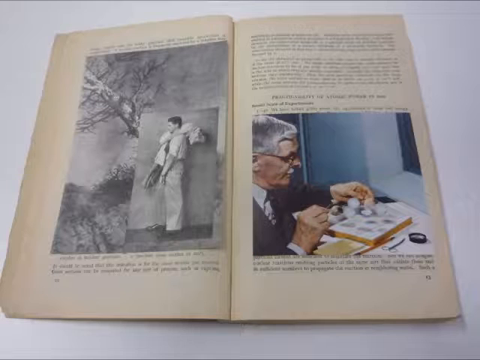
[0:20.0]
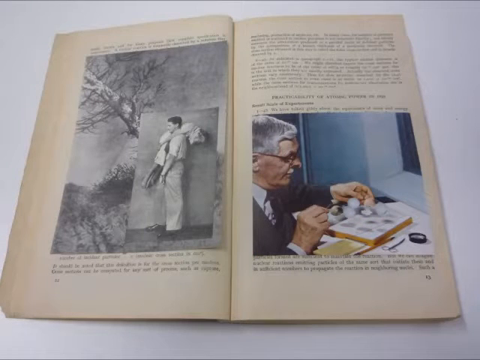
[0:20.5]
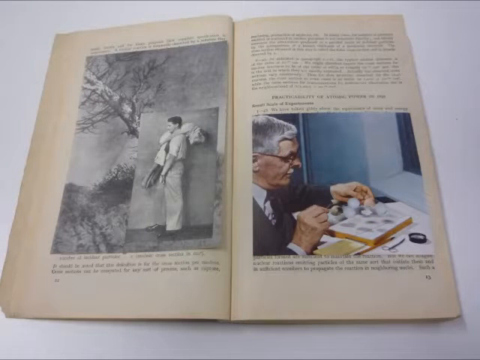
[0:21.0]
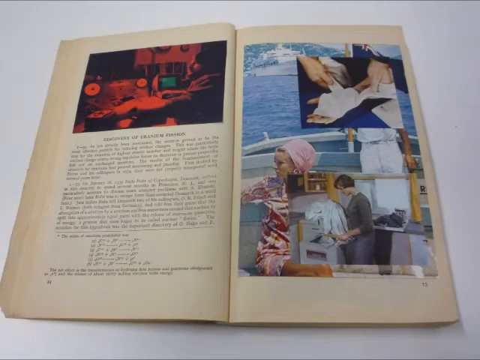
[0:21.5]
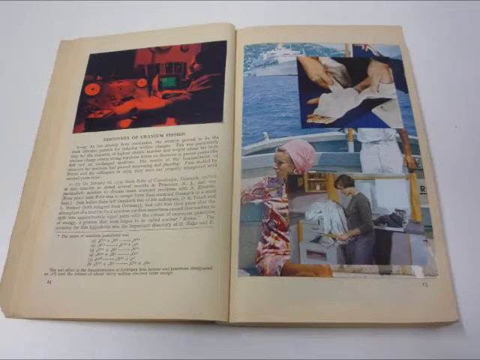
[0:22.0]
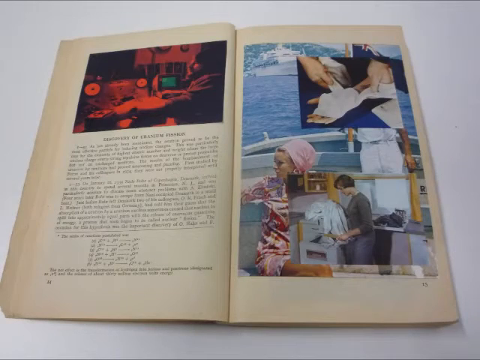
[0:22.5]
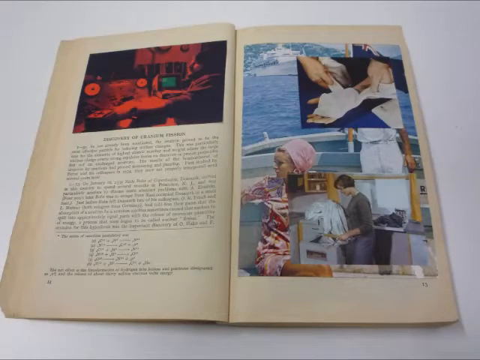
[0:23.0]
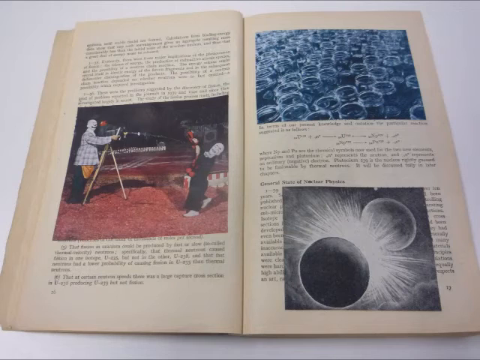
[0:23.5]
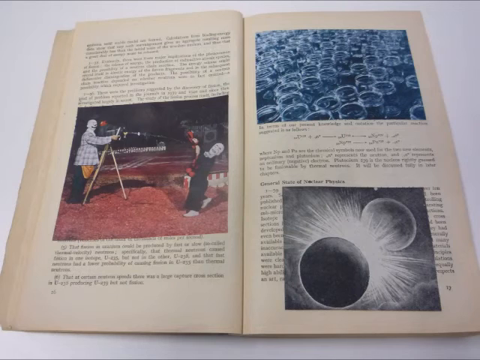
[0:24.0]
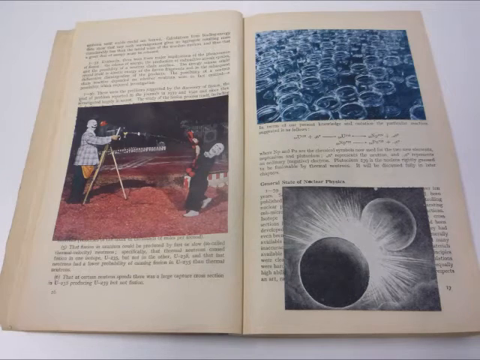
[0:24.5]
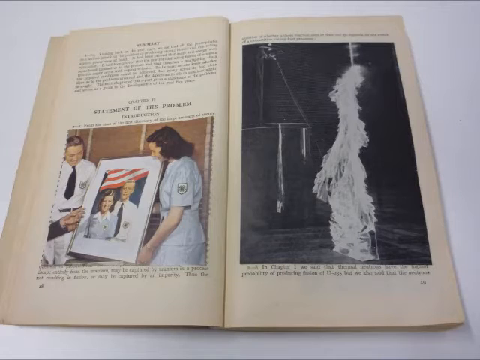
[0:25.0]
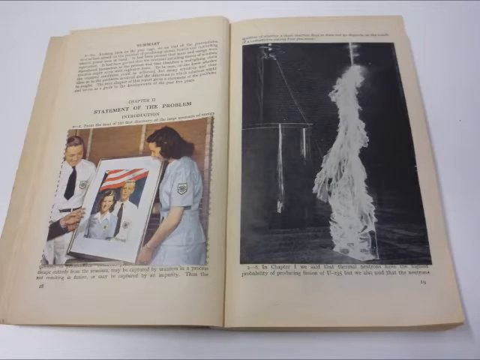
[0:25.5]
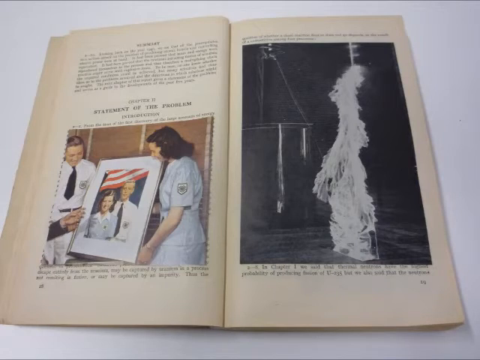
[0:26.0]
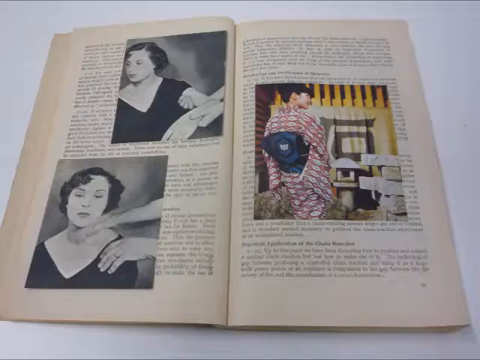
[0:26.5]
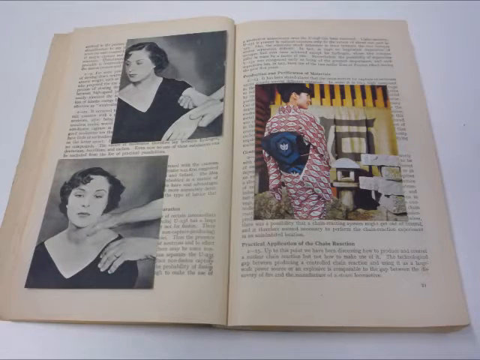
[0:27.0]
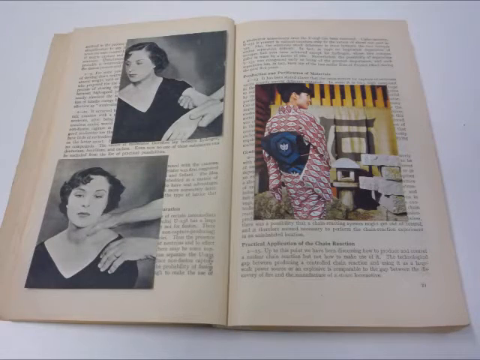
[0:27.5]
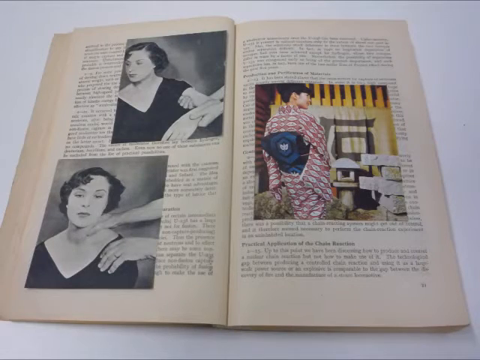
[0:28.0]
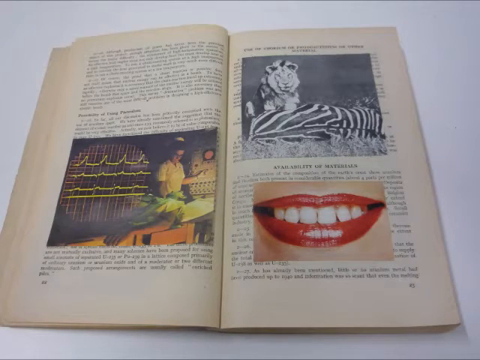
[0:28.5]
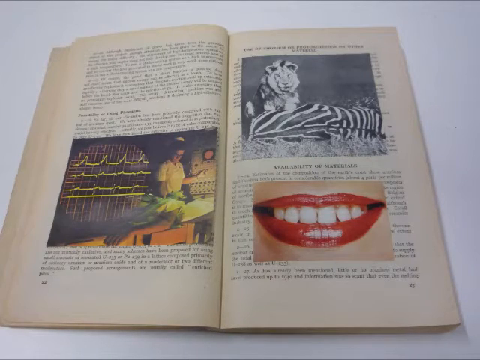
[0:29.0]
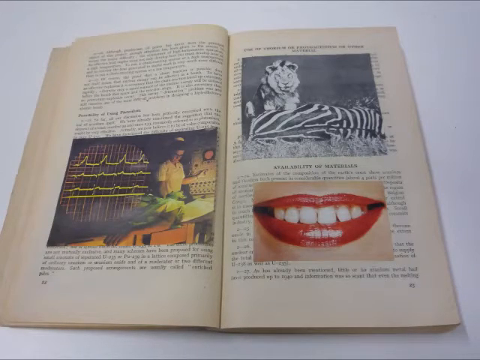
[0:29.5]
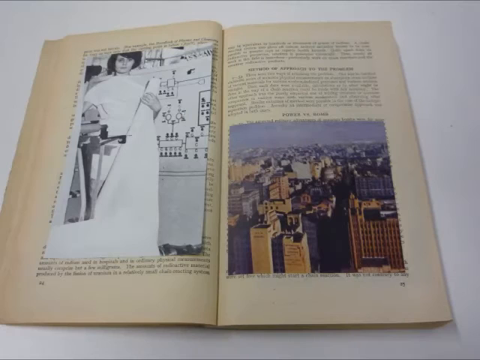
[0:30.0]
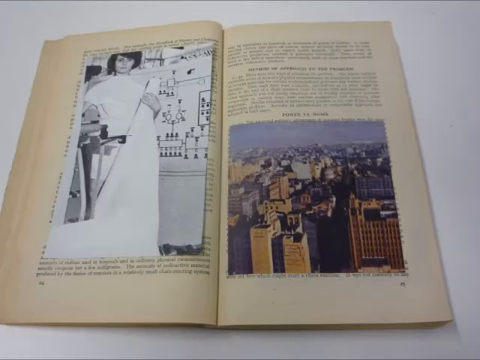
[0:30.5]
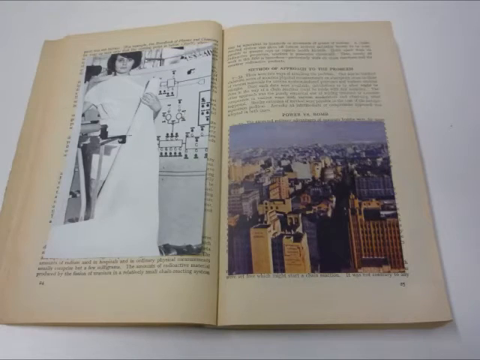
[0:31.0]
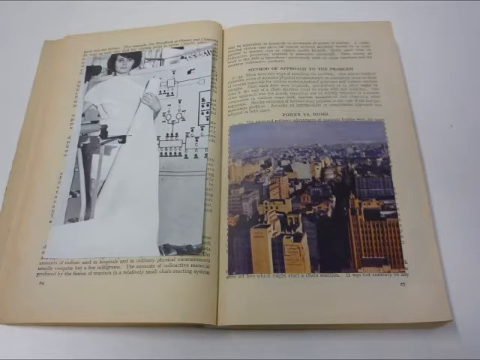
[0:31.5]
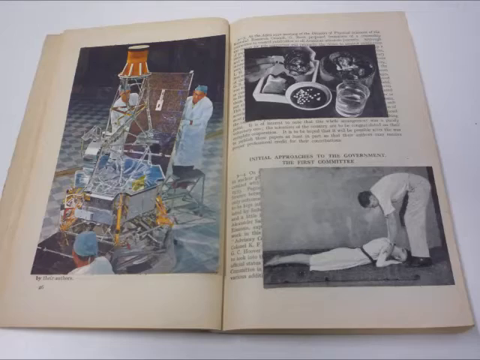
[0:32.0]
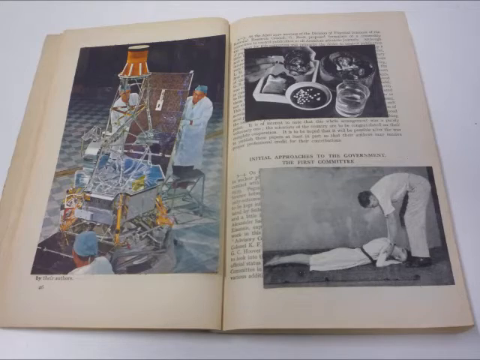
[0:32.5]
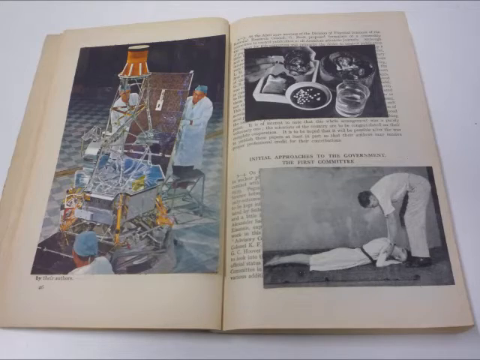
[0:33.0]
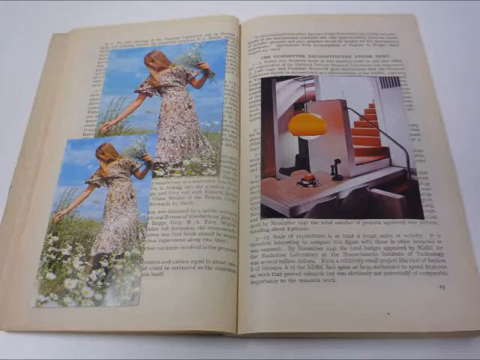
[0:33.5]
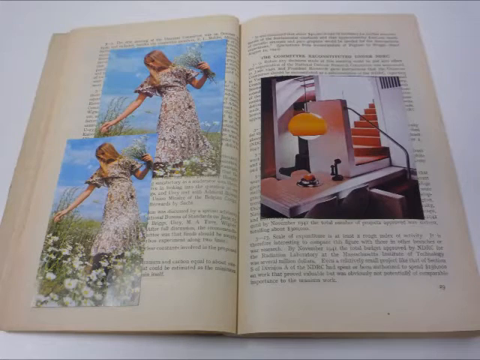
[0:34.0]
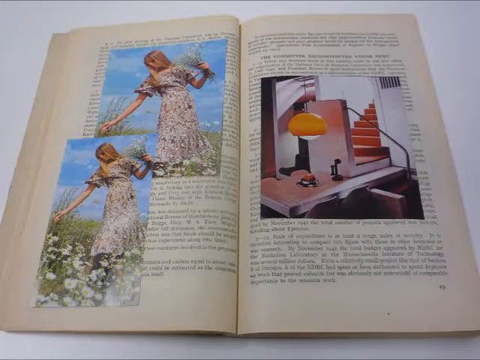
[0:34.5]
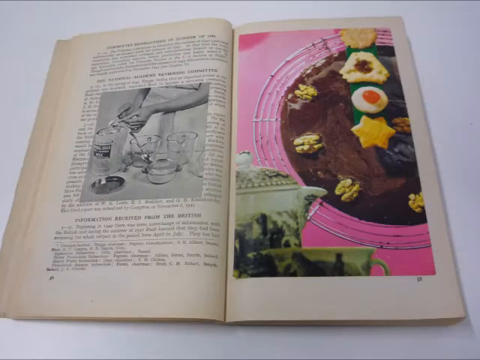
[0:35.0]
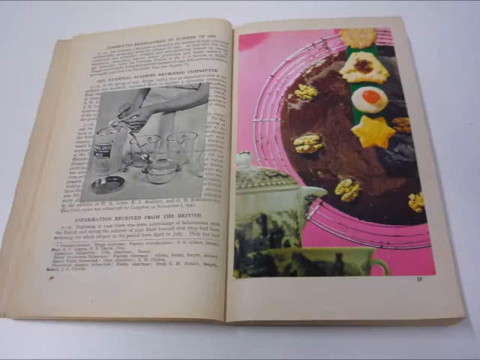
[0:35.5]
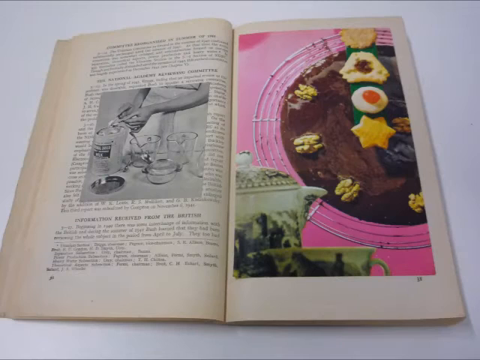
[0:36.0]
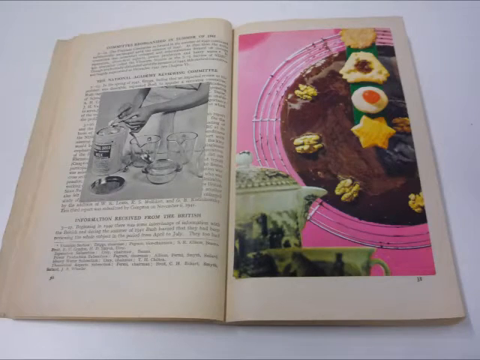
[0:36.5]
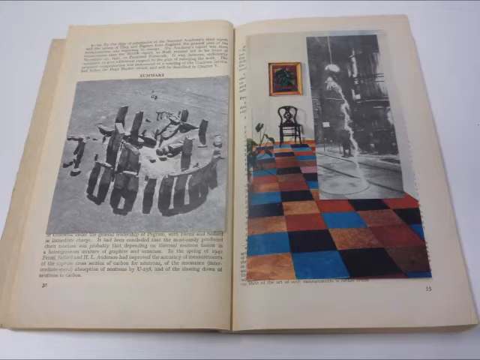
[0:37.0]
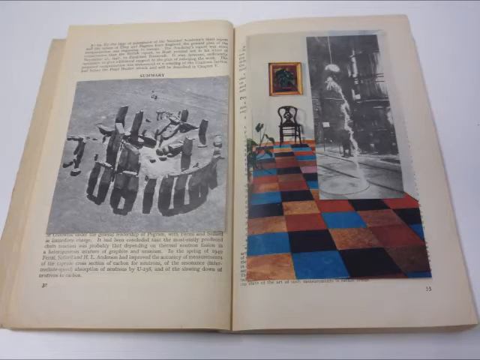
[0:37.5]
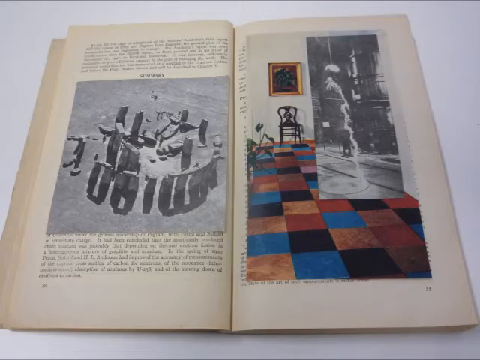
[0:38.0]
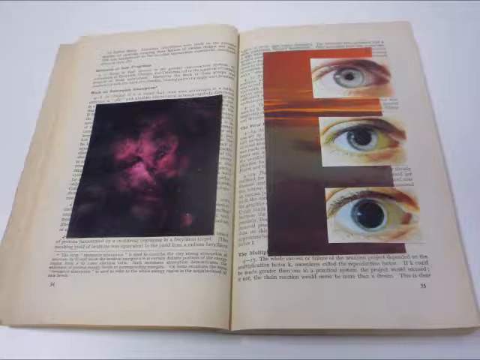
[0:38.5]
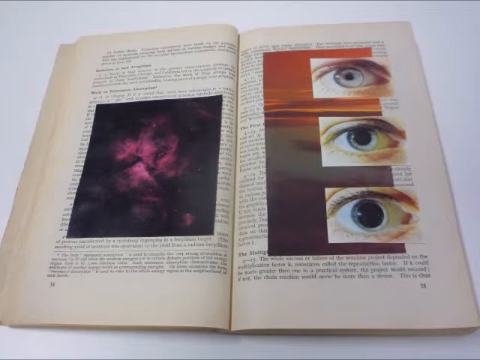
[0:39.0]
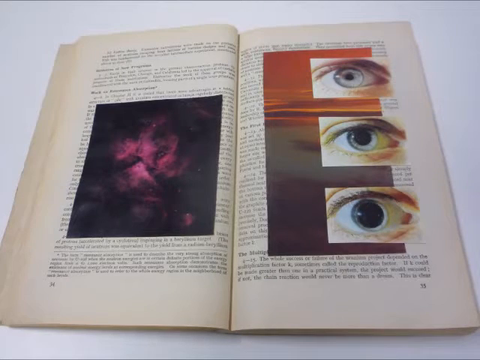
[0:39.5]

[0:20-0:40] The internal pages of the atomic energy leaflet show text alongside some black and white pictures and some colour pictures, all of different things. There are close-up headshots of women, one of what looks like a lion that might have just killed a zebra, and a close-up of a woman's lips and teeth. Some pictures seem slightly more scientific, including one of someone who looks like he is plugged into some kind of machine that might be reading his brainwaves. There are also pictures above a city skyline and more pictures of what look like scientific experiments being conducted. On closer inspection, some of the pictures appear not to be part of the text but placed into the leaflet by somebody; they look like separate items added in rather than embedded in the text, which would explain why some seem completely unrelated to atomic energy.